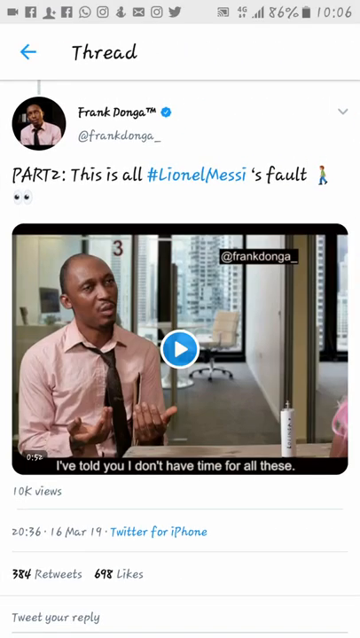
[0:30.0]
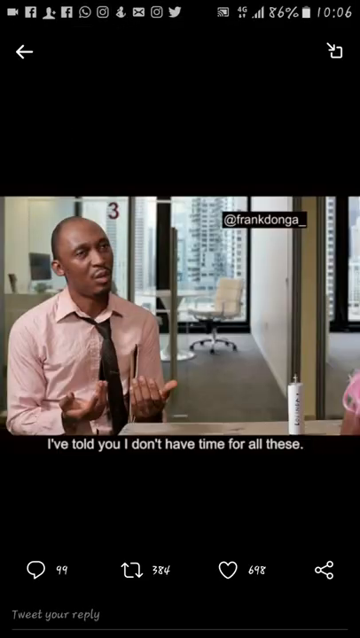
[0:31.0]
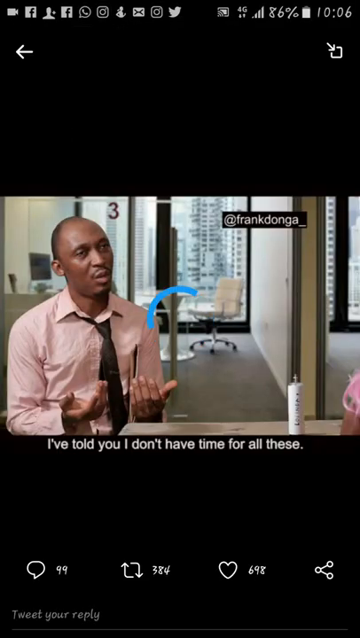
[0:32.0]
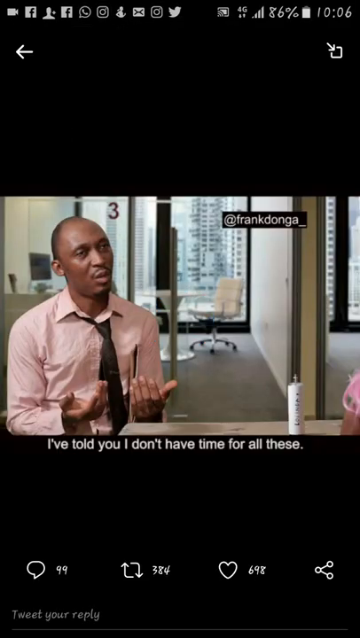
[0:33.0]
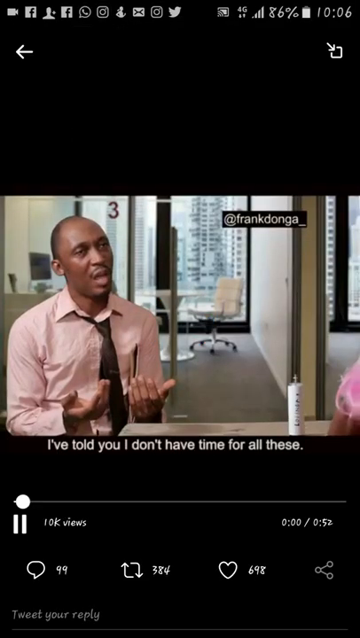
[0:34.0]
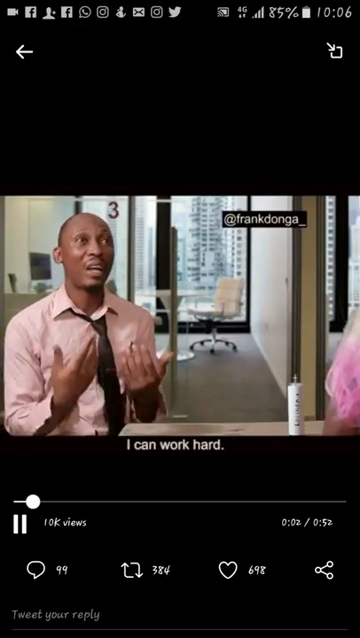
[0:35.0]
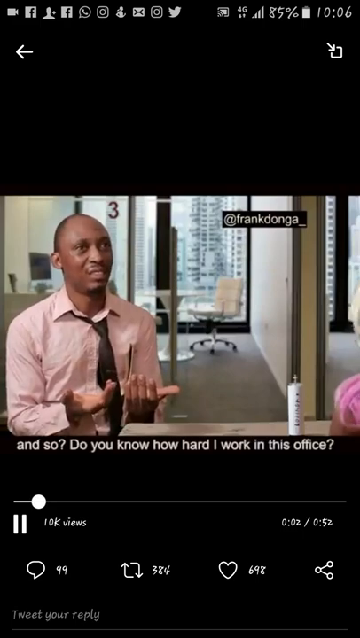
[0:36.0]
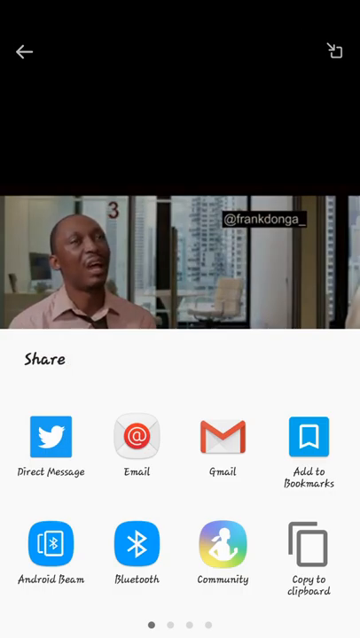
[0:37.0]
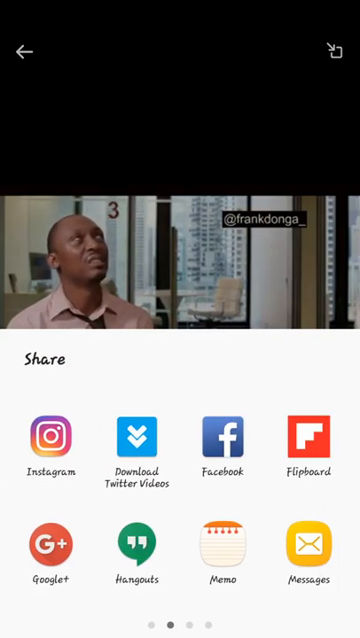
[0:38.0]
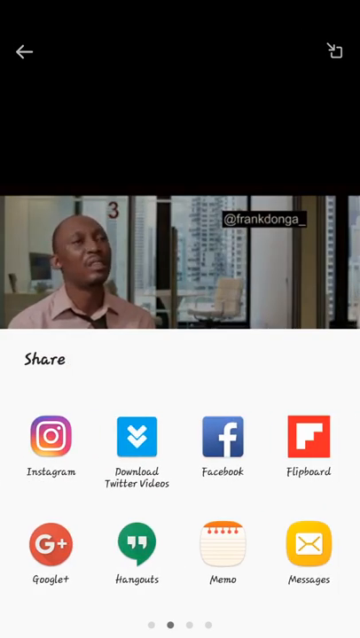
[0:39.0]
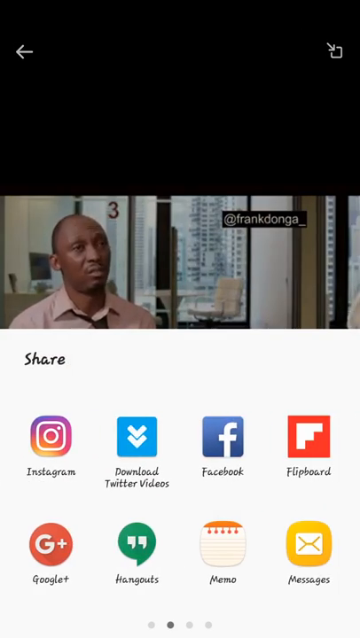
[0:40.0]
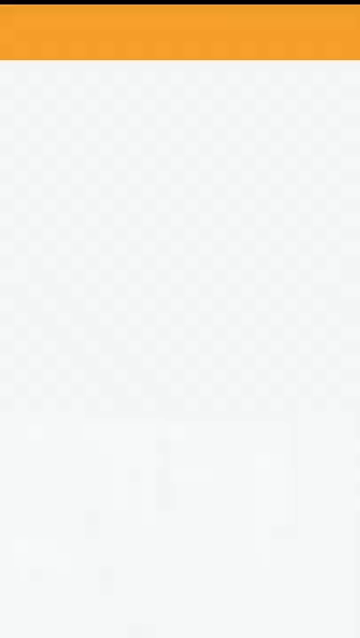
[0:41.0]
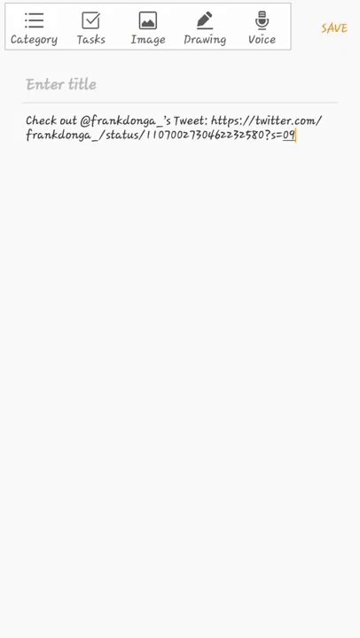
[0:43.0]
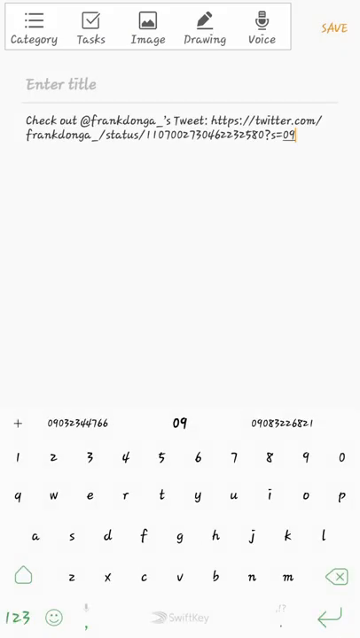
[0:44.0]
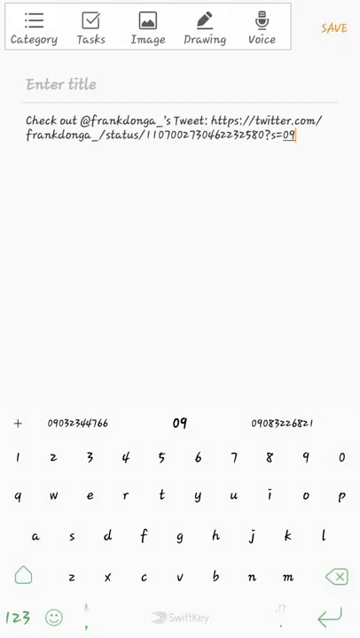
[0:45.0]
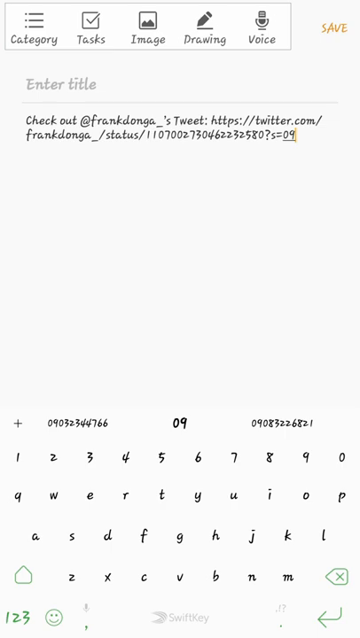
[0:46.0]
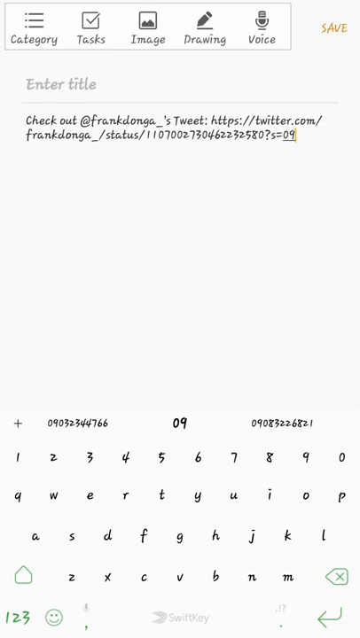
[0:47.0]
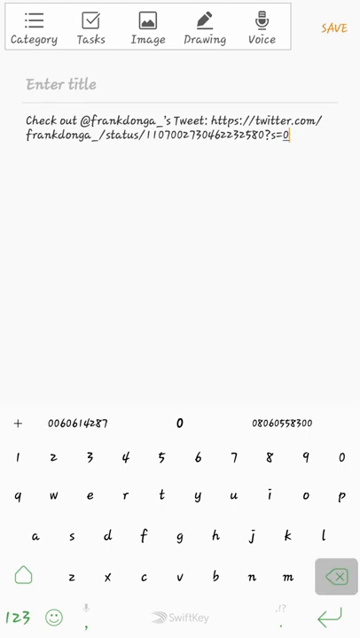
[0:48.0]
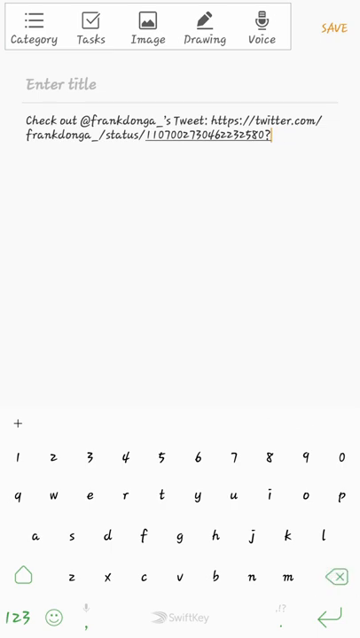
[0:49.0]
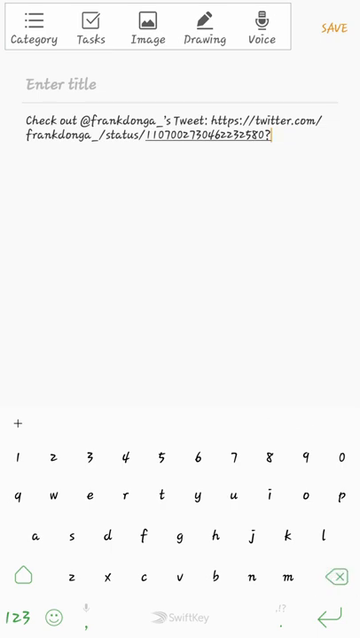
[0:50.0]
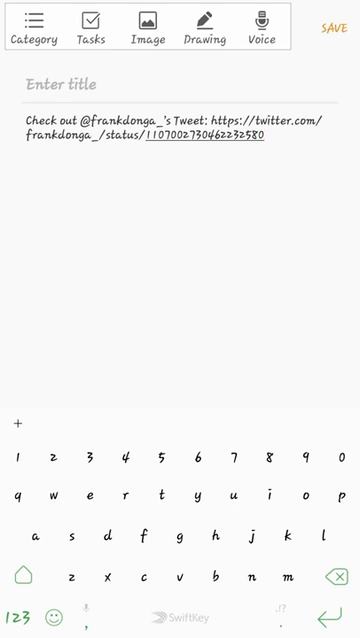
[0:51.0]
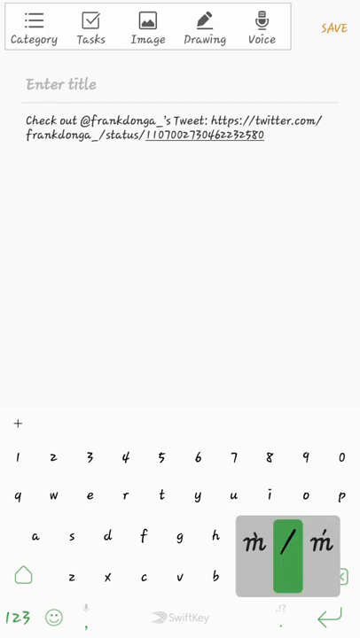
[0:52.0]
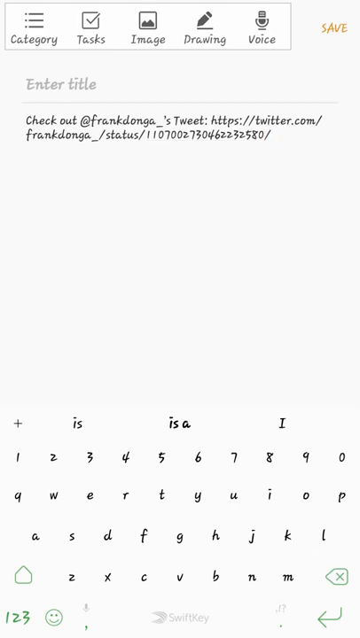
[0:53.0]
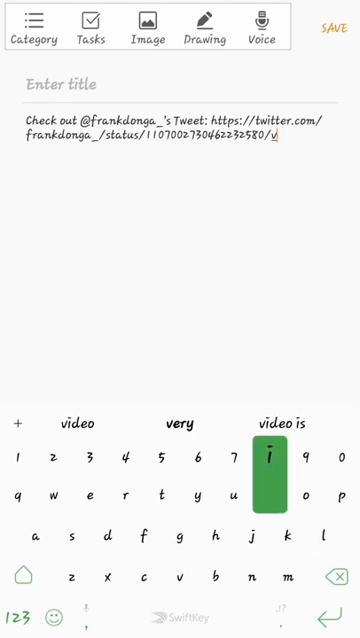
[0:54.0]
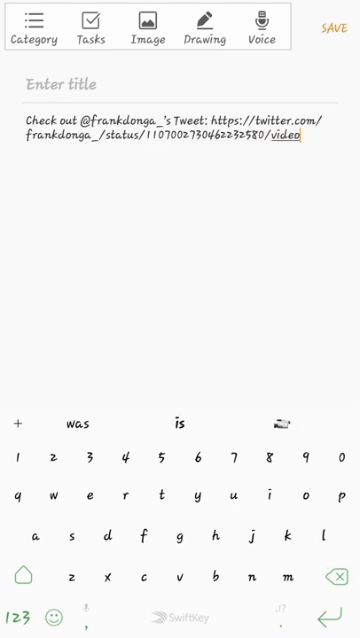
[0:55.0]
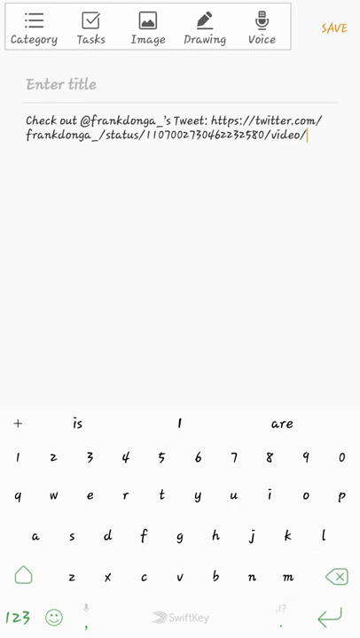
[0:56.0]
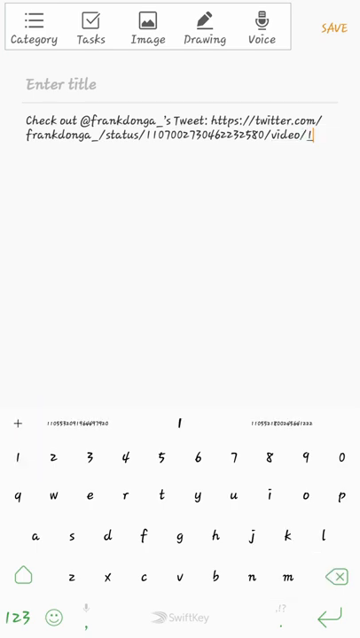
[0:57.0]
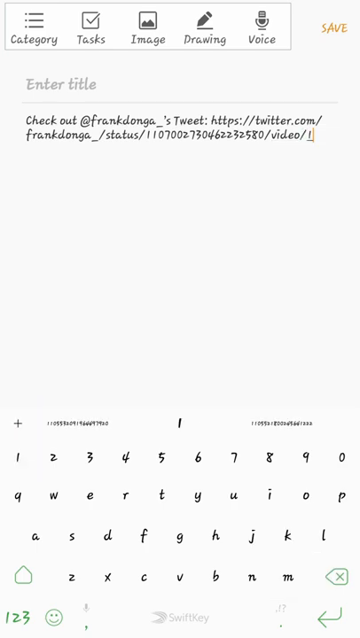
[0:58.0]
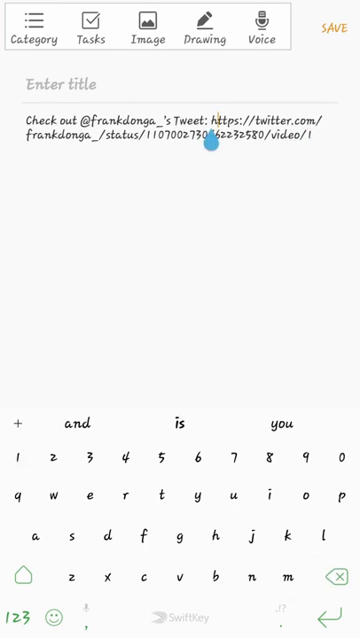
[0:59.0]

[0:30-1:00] A video posted by Frank Donga is picked, with words written on the screen and the title "Mr. Frank, you can start the new job next week." The video is opened and starts to play. Under the video are 99 messages, 698 likes and 384 shares. While the video plays, the cursor goes to the share icon and scrolls down past other icons on the screen. He then goes to where "memo" is written and copies the link. The pad is then cleared up to where there is a question mark, the word "video" is typed, and it moves on to another icon.